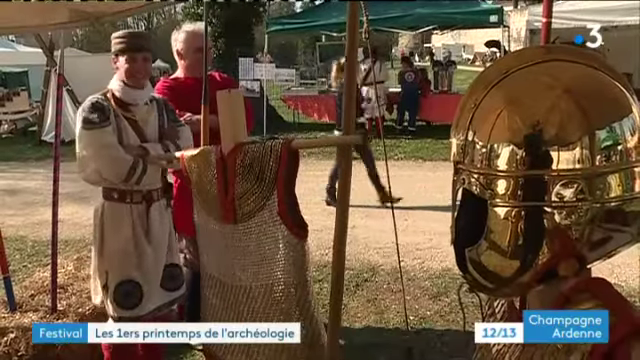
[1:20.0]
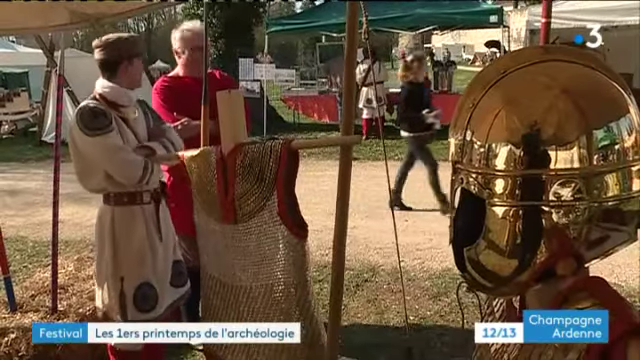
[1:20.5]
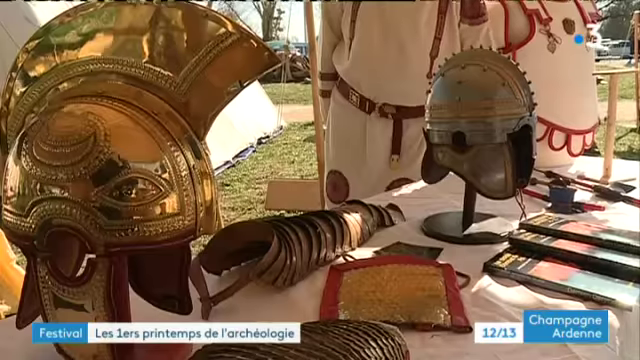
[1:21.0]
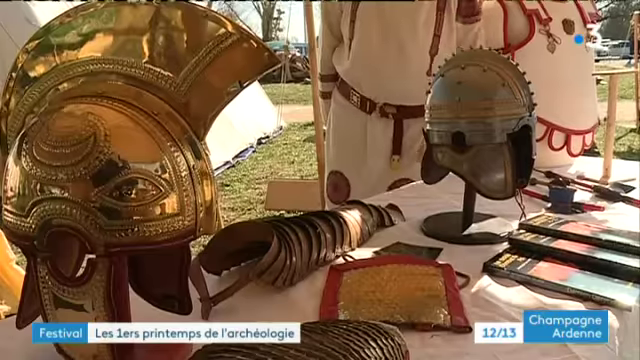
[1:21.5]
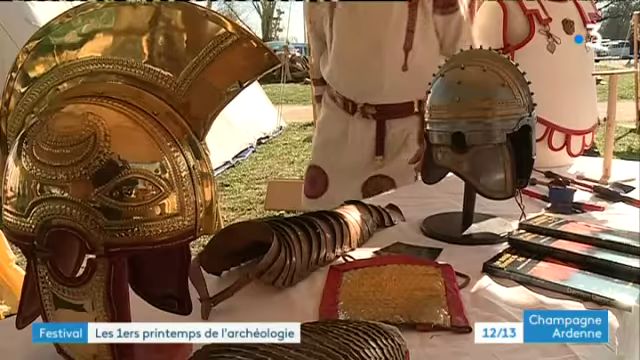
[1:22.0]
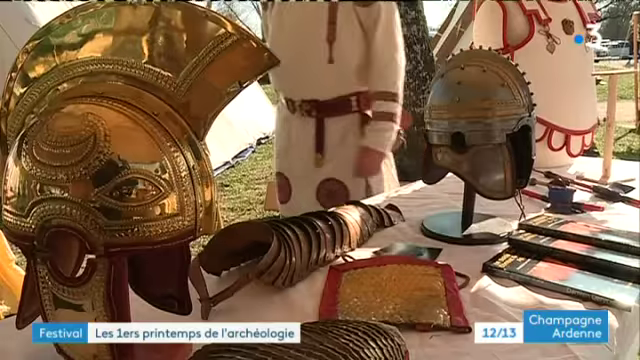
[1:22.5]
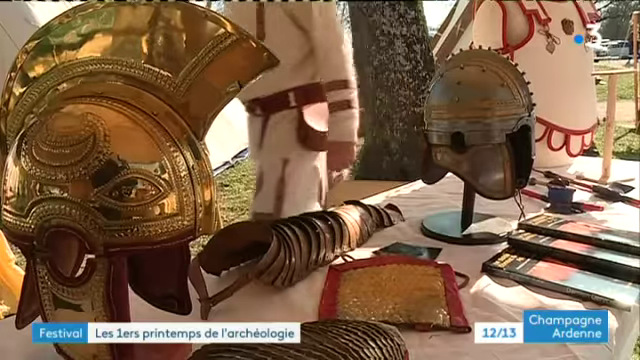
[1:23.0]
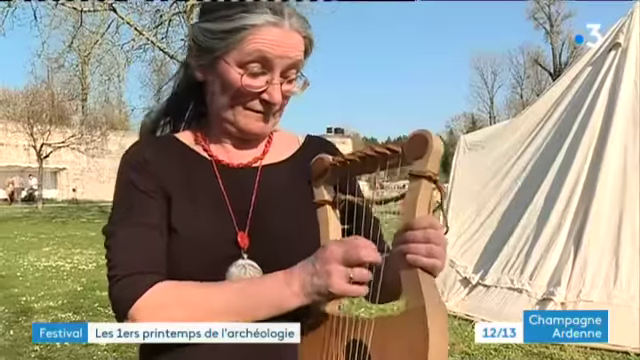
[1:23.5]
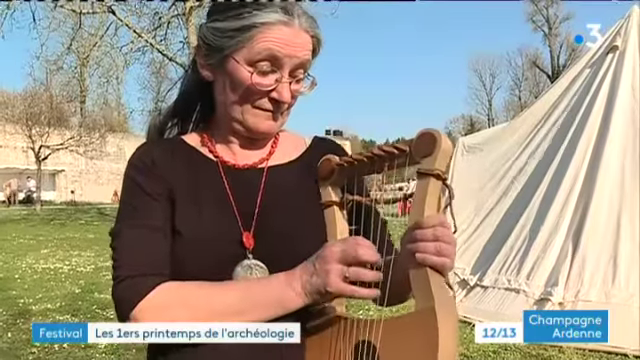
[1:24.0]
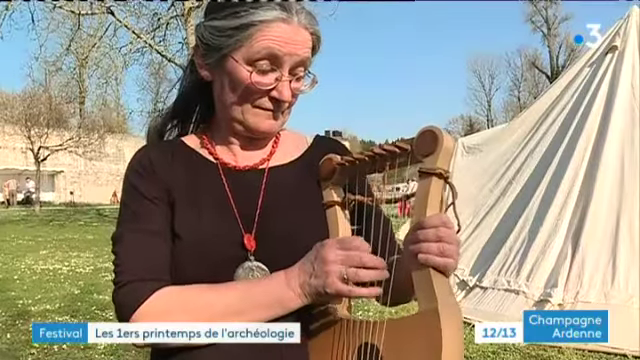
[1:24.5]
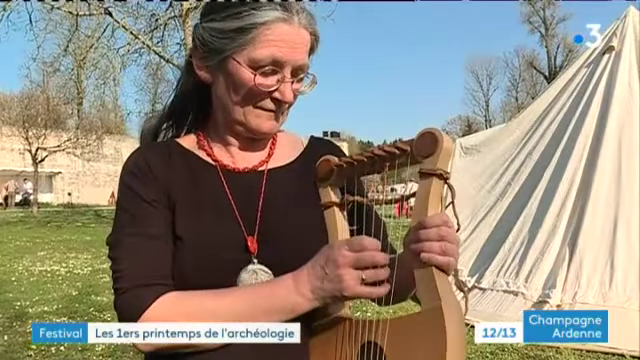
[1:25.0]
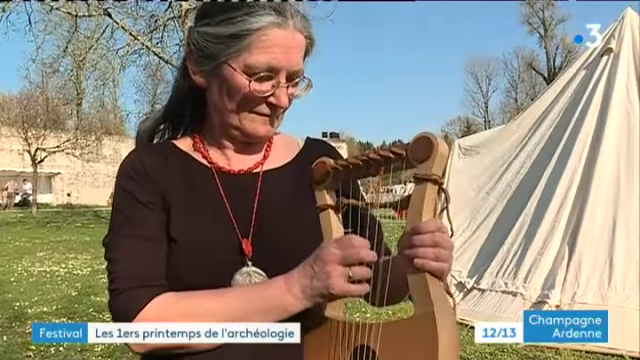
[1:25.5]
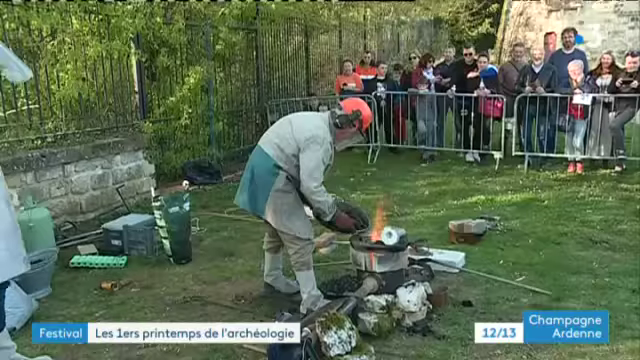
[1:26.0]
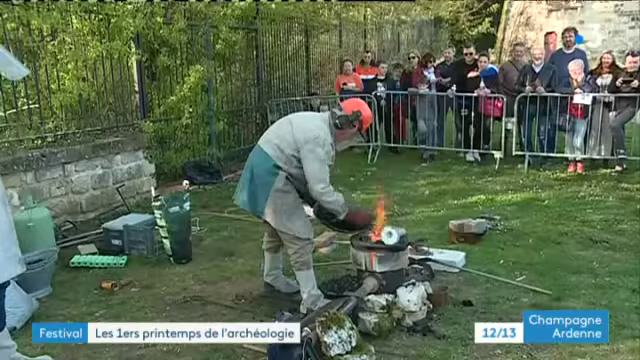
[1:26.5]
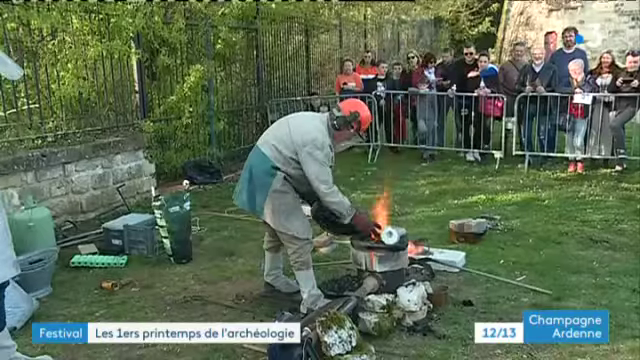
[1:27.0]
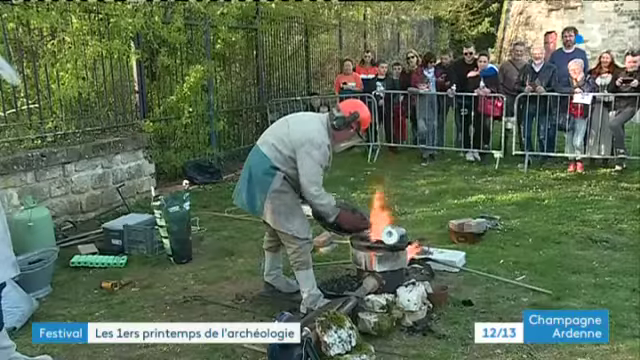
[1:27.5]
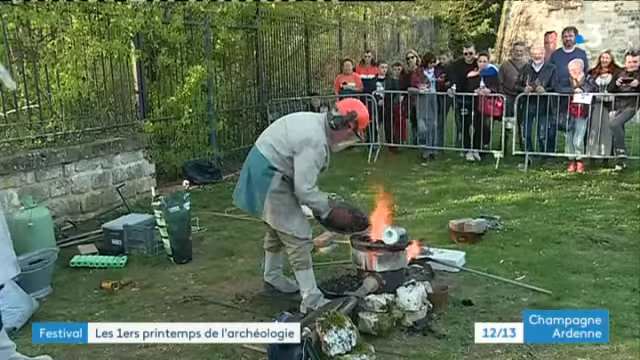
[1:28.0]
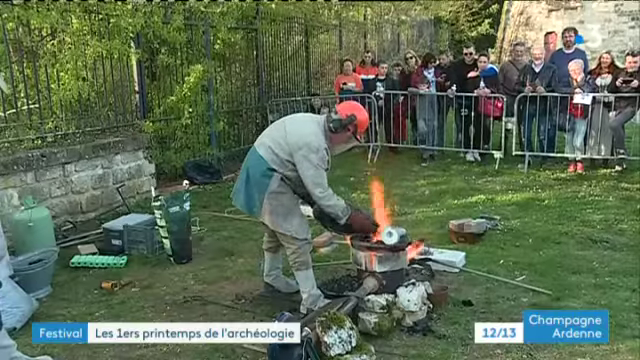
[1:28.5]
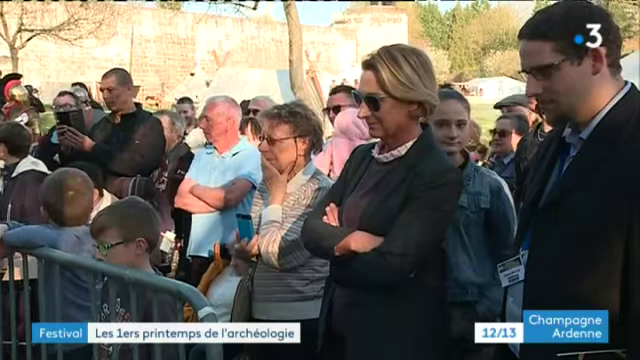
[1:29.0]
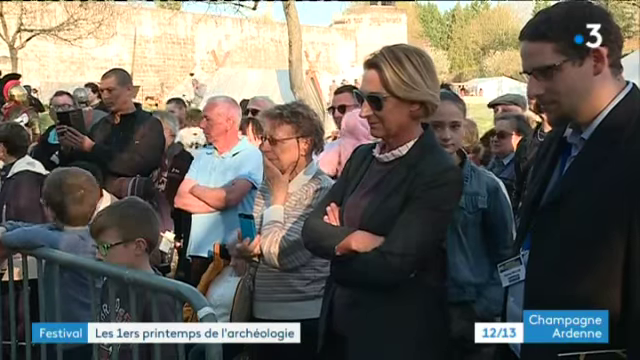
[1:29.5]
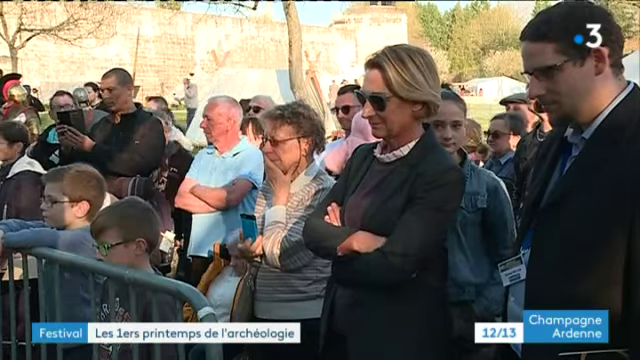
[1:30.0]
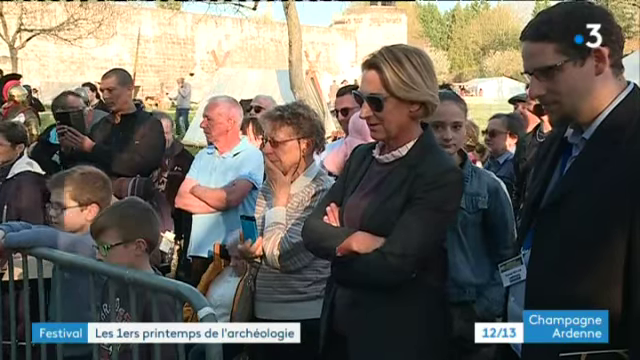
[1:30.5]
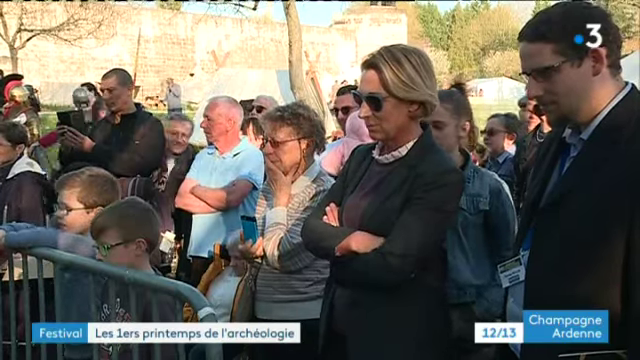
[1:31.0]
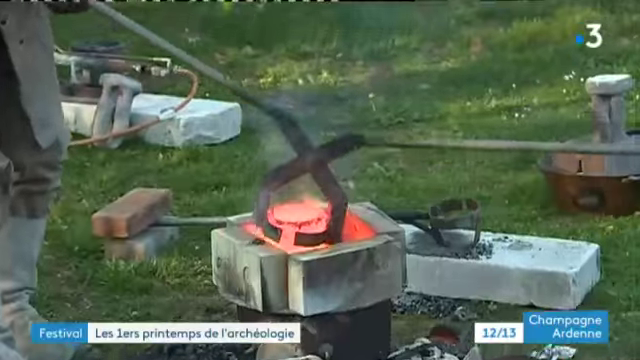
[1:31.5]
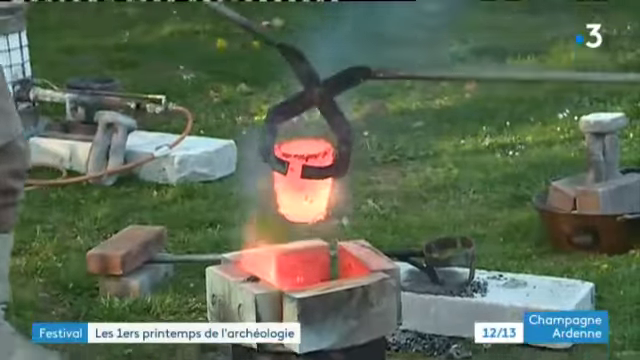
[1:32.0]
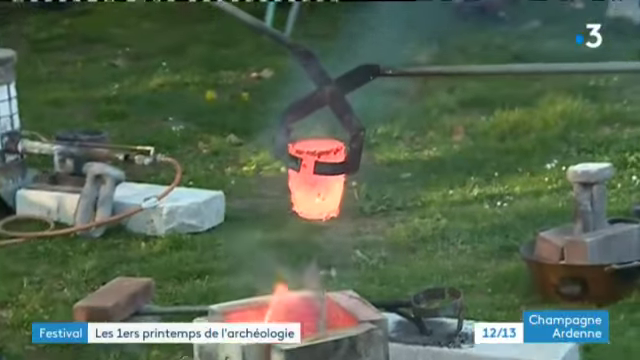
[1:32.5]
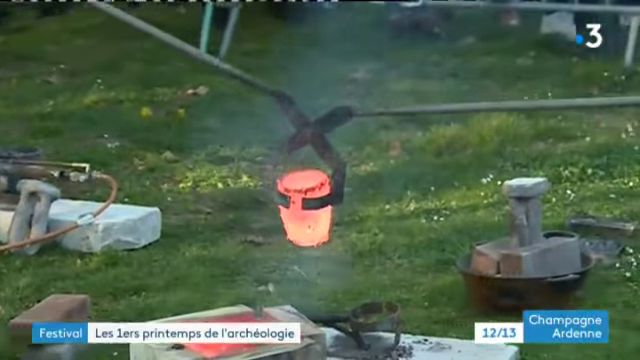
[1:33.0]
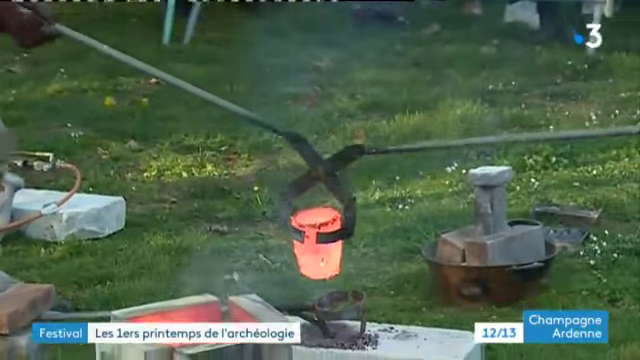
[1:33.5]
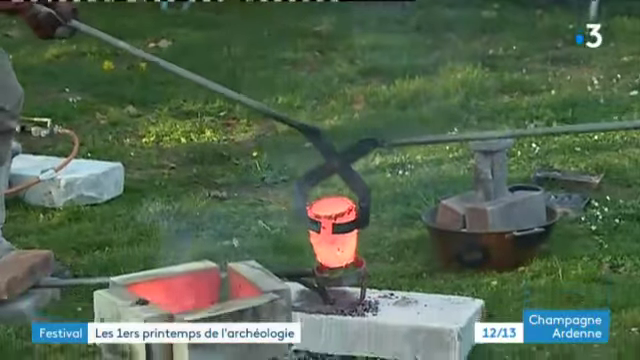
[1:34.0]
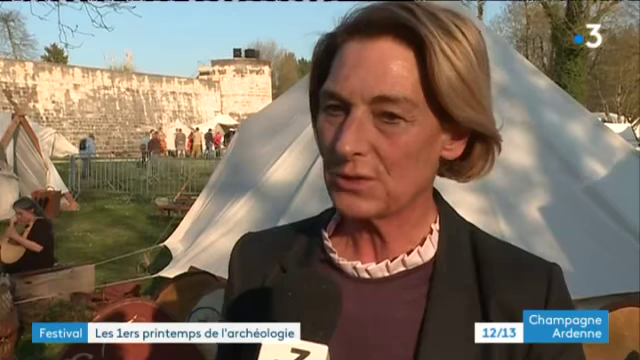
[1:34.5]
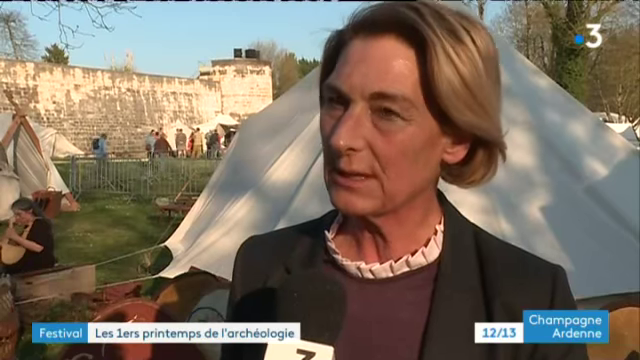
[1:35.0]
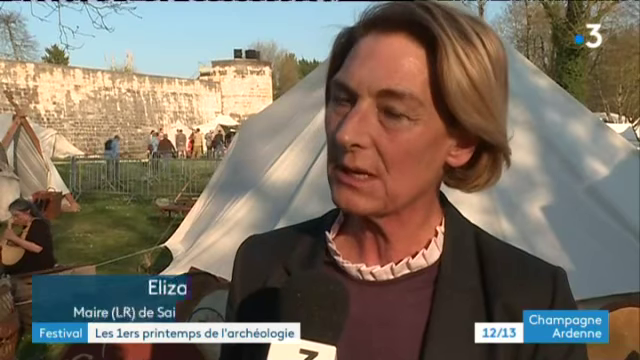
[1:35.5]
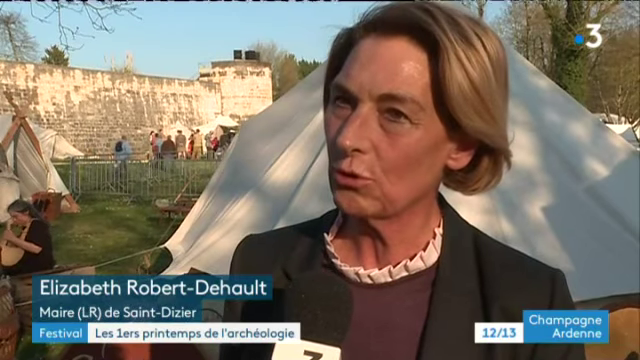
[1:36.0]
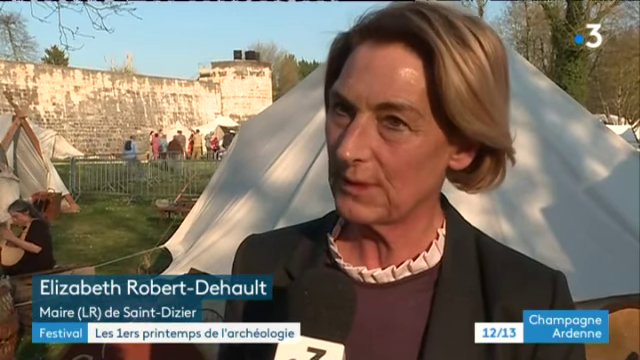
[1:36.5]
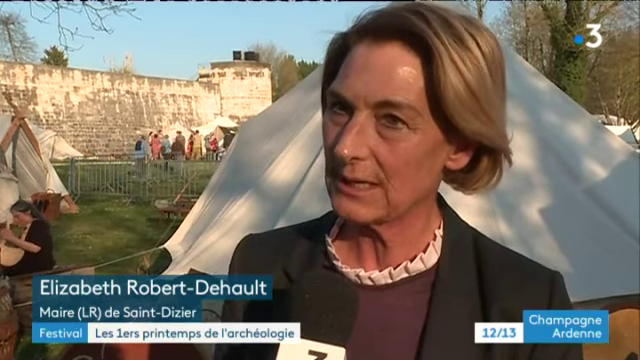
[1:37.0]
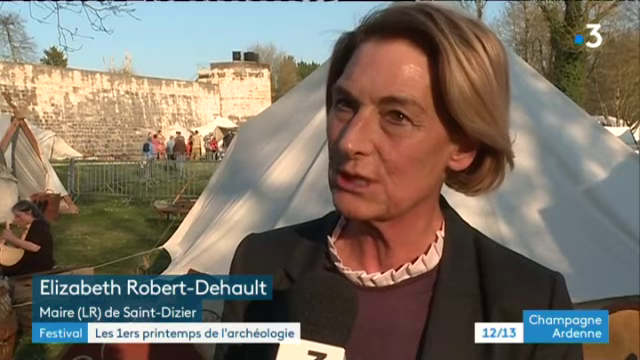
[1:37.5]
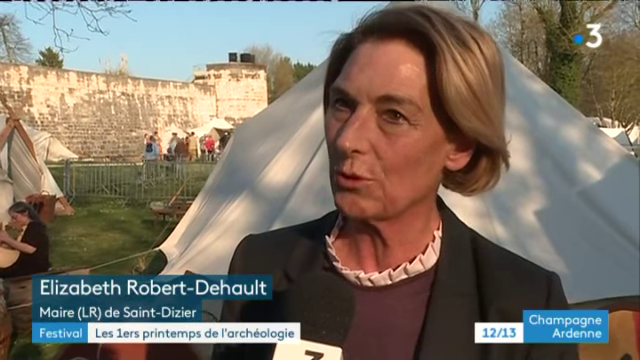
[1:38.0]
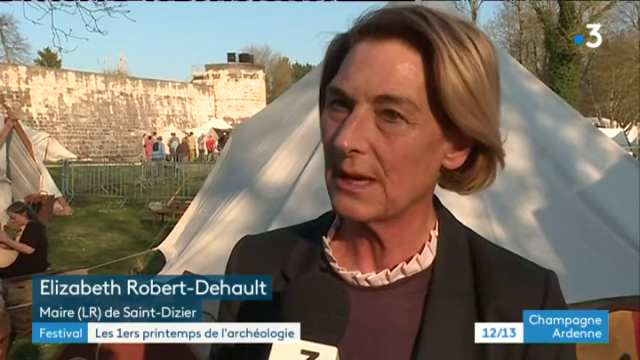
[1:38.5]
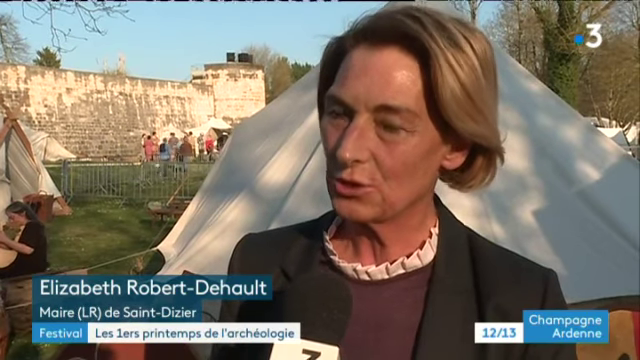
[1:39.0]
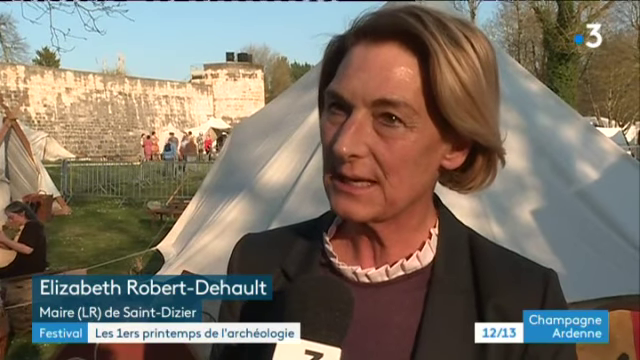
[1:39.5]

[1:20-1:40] The camera appears to be stationed inside a tent or marquee, looking out at the event. On the right of the screen is a very shiny gold helmet that looks like an ancient Roman helmet, and in the centre some chainmail armour is suspended on a wooden frame. On the left, two men in medieval dress are standing by, smiling; one wears a red tunic, the other a black and beige tunic and a brown hat. Further marquees, green grass and several tourists milling around are visible in the background. The next shot shows a shiny gold helmet on the left and a darker grey helmet on the right, arranged on a desk covered in a white cloth with several other items of historical costume, and two men in beige medieval clothing in the background. Then a woman with grey hair and glasses, wearing a brown top with a red beaded necklace and a large medallion, plays a small harp or lyre, with part of a tent to her right. Next, a small crowd behind a fence watches a man who seems to be melting metal over a flame, and a larger crowd to the side watches the same demonstration. The man, who appears to be a medieval blacksmith, lifts a red hot item out of the fire with a large pair of tongs and places it on a brick. Then a woman with blonde hair in a black jacket talks to a reporter behind the camera; a blue rectangular box in the lower left corner says "Elizabeth Robert", with further French text underneath. She stands in front of a white tent, with a medieval stone wall and a turret behind her.